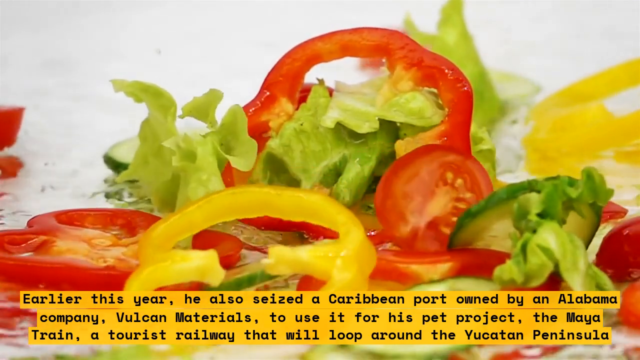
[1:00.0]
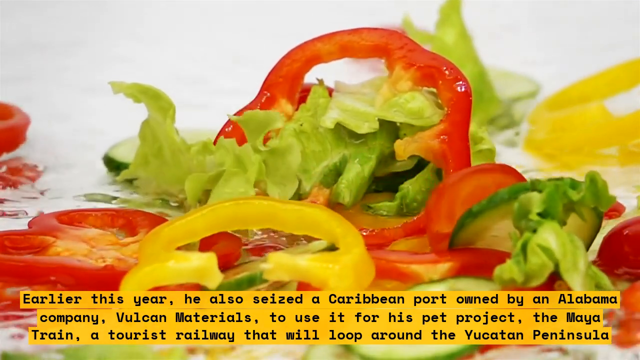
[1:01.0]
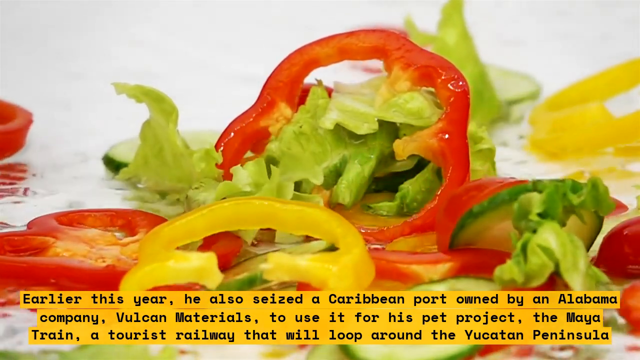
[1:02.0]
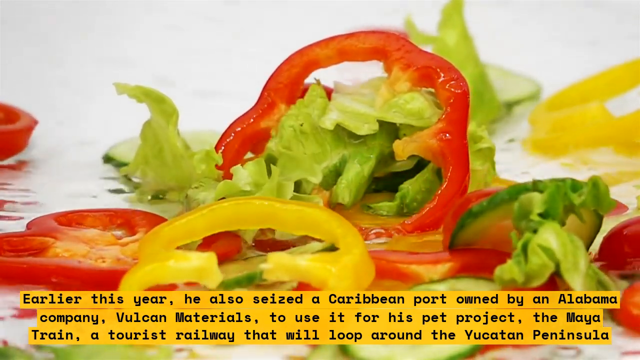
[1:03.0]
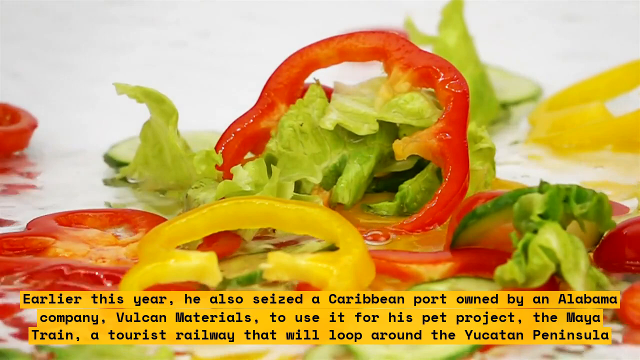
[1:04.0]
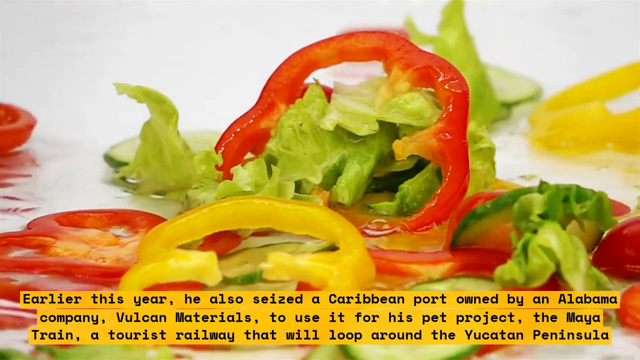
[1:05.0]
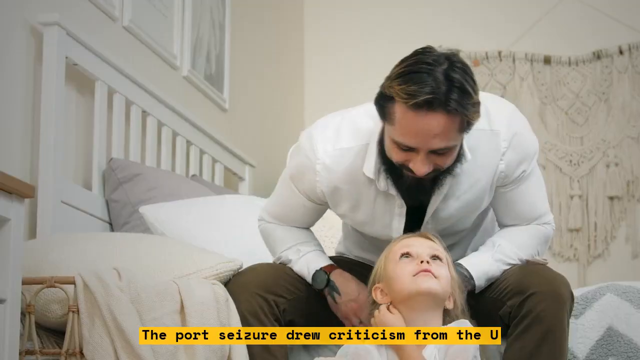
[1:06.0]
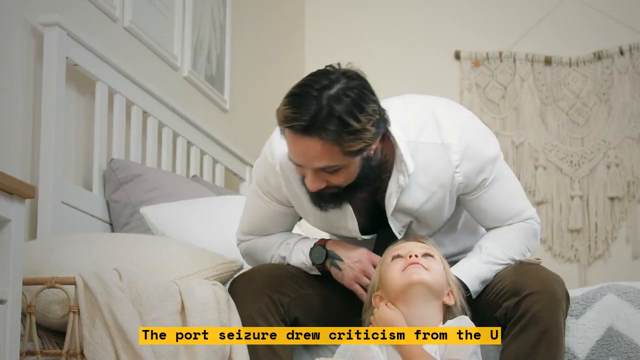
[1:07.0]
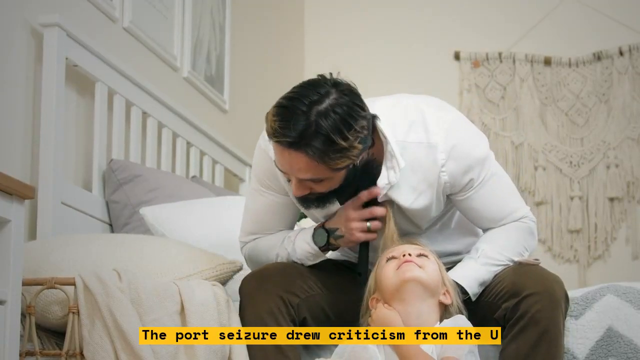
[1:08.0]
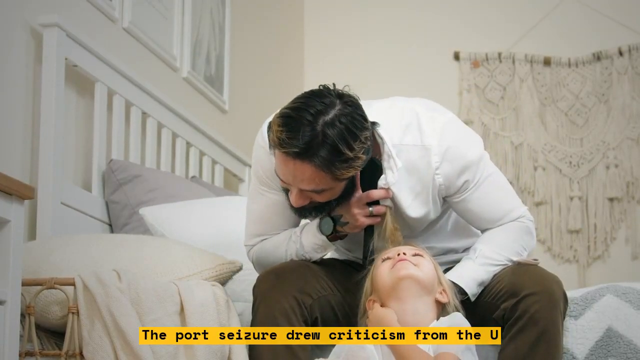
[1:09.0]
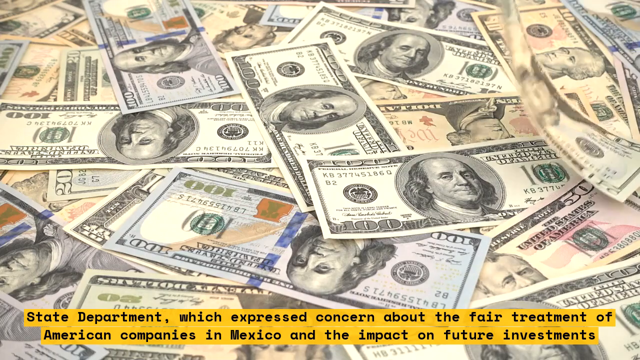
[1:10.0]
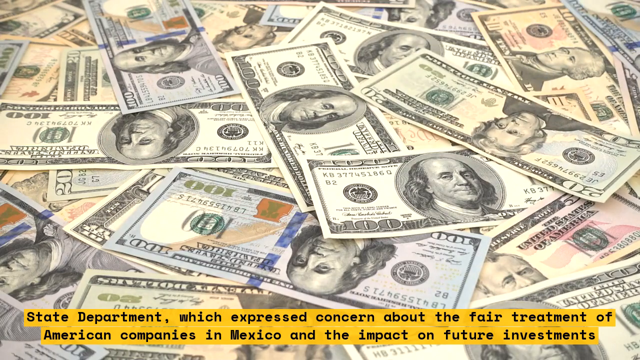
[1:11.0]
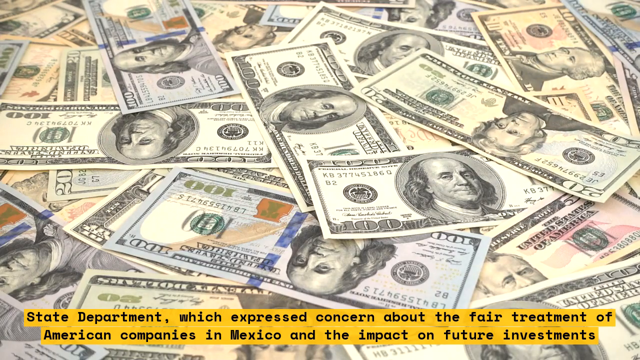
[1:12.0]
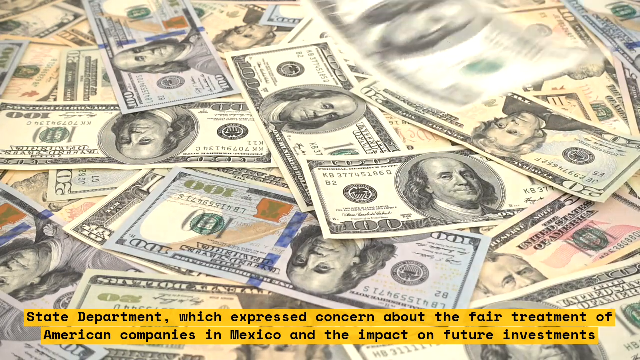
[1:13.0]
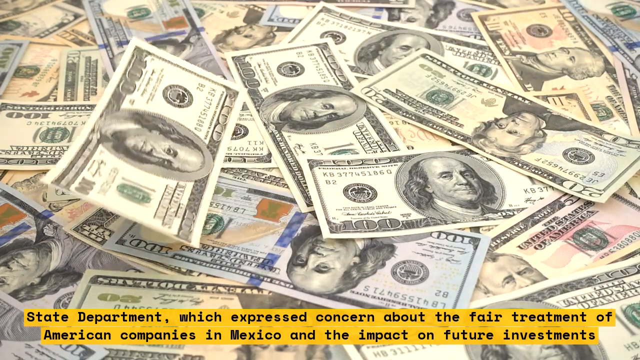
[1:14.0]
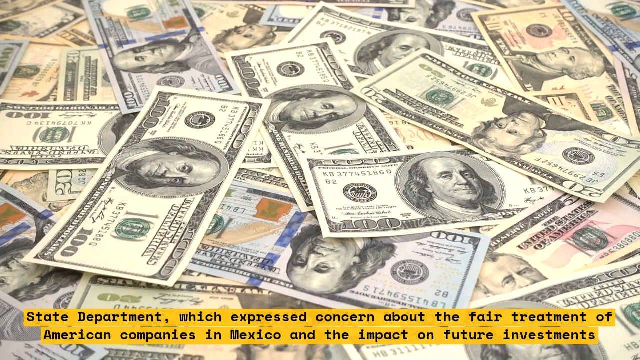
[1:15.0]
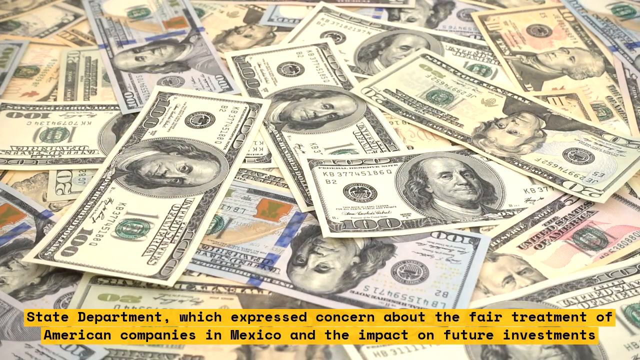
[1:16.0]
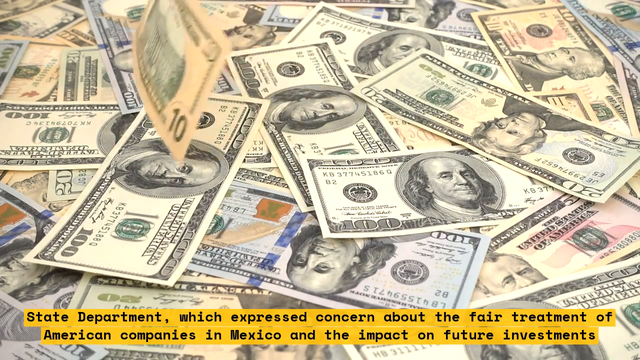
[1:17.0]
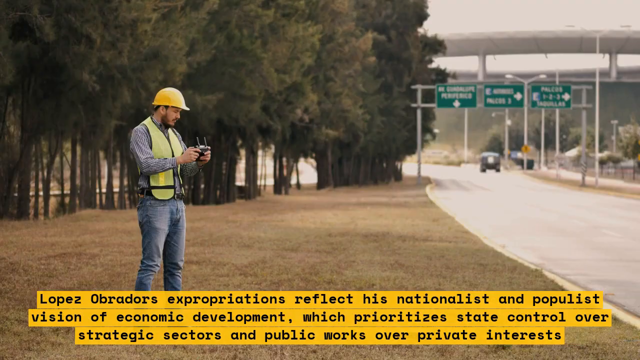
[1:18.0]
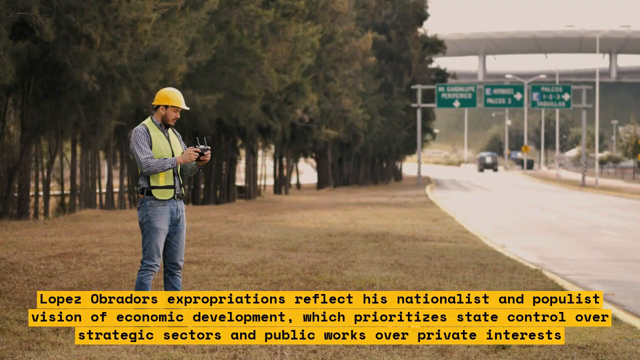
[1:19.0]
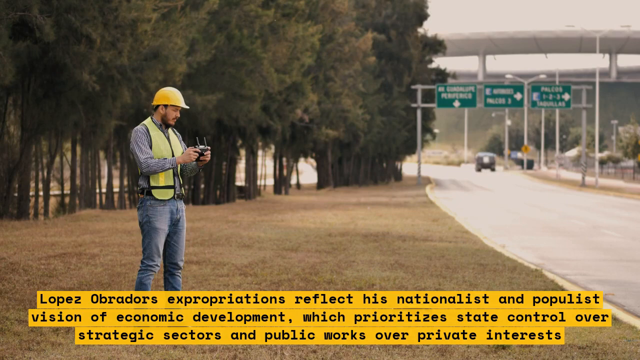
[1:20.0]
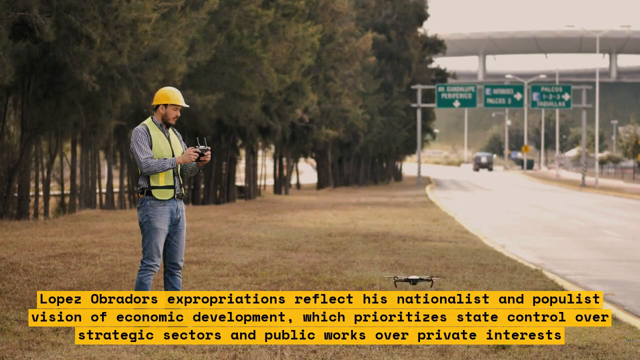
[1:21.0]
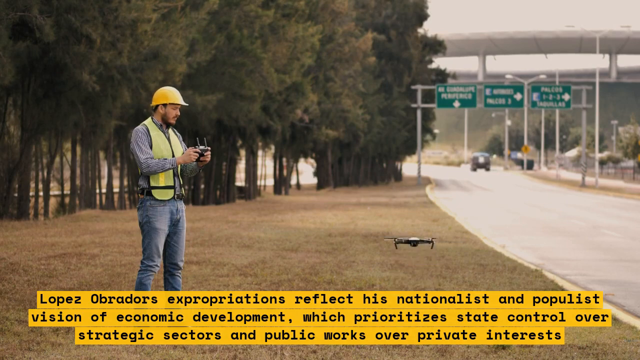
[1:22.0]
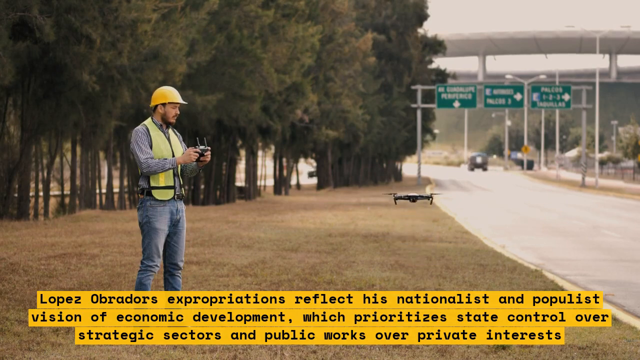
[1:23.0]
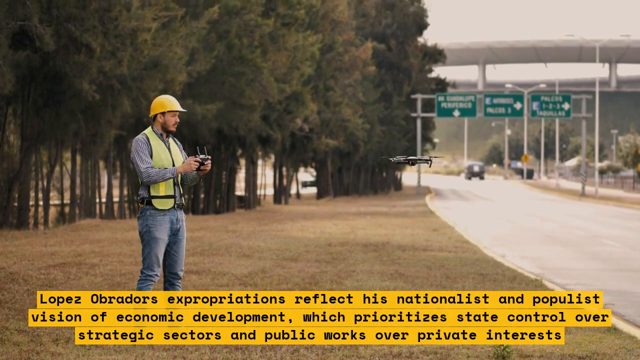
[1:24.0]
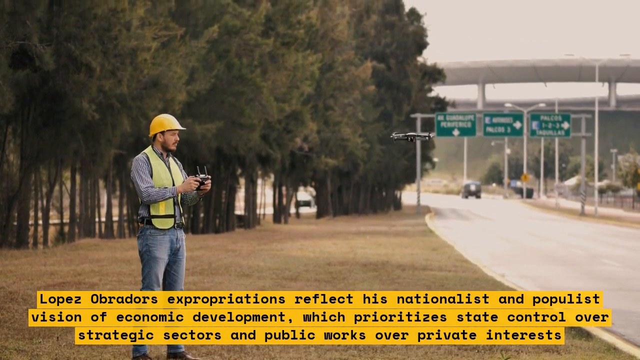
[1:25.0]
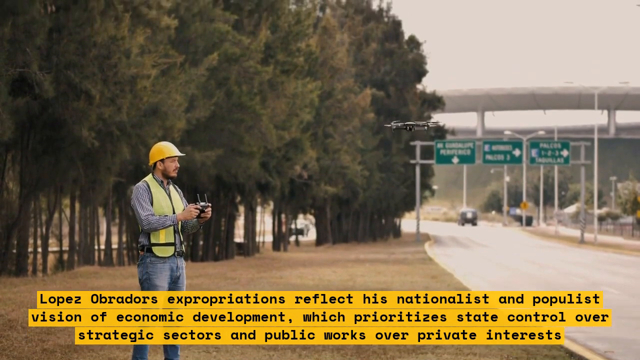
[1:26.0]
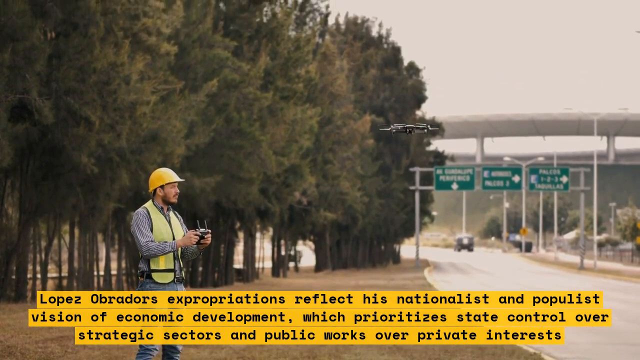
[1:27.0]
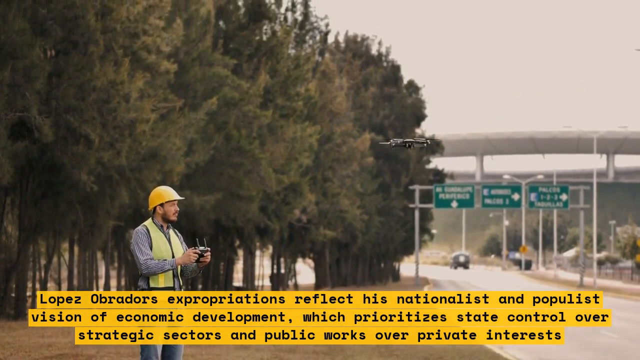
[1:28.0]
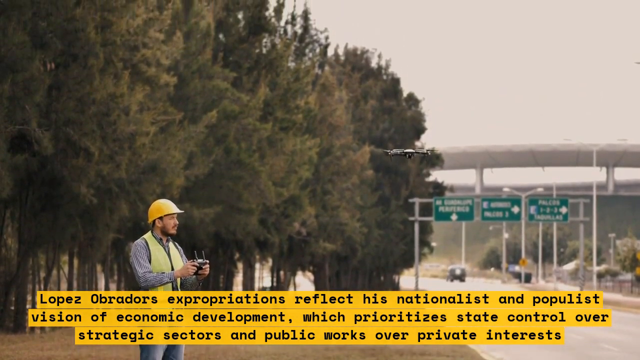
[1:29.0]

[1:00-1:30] The text about the seized Caribbean port owned by Alabama company Vulcan Materials and the Maya Train tourist railway looping around the Yucatan Peninsula remains on screen while vegetables are shown: tomatoes, yellow peppers and a little lettuce, apparently some type of salad being created, against a white background with some water. Text then mentions that the port seizure drew criticism from "the State Department which expressed concerns about the fair treatment of American companies in Mexico and the impact of future investments." A pile of money appears, with hundred, twenty, fifty and ten dollar bills, and bills, including $10 bills, appear to be dropping from the sky. Then a person in a construction hat and a yellow vest stands on what appears to be the side of a roadway, apparently using some type of instrument to fly a drone in the air.